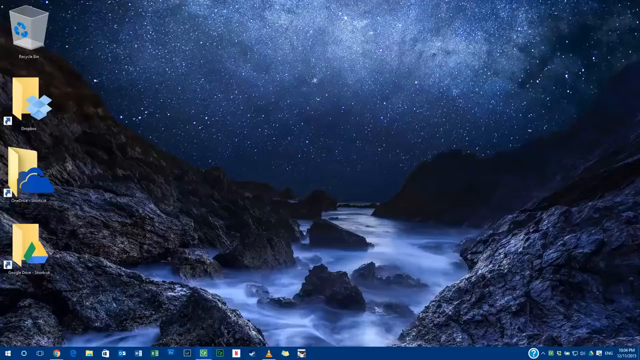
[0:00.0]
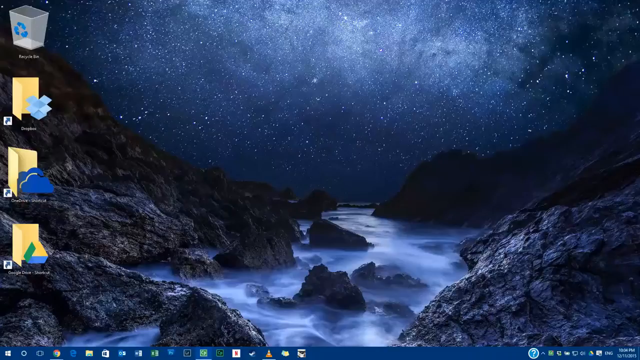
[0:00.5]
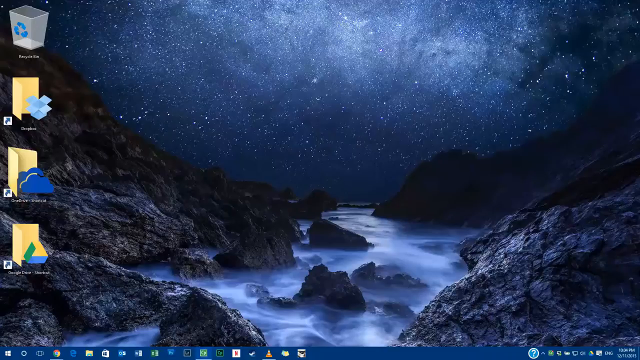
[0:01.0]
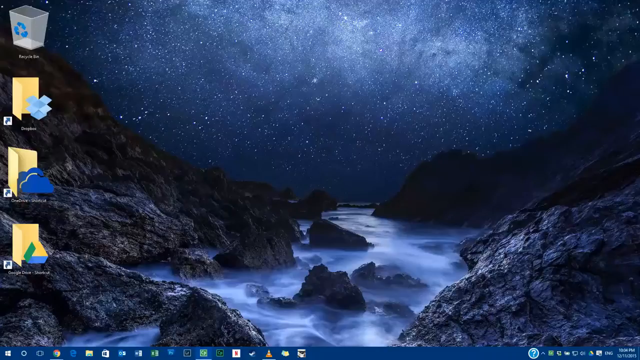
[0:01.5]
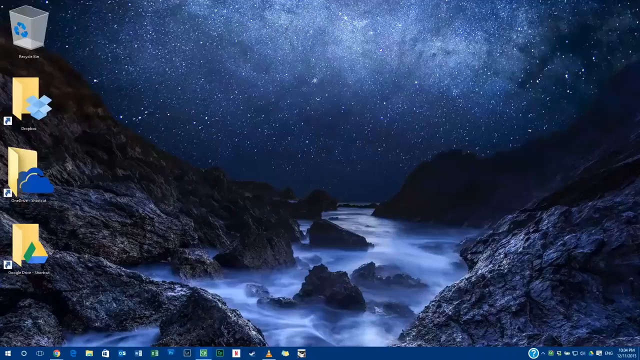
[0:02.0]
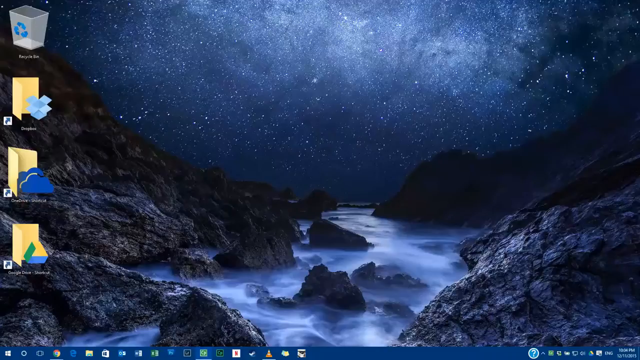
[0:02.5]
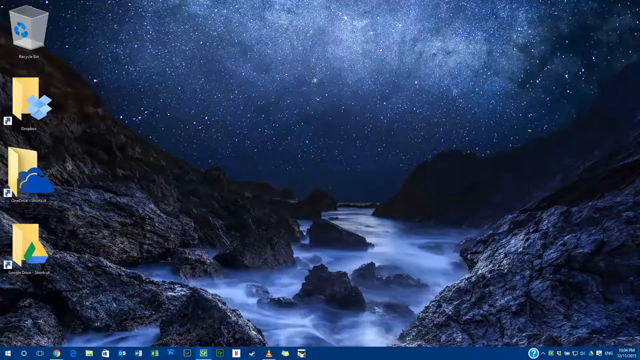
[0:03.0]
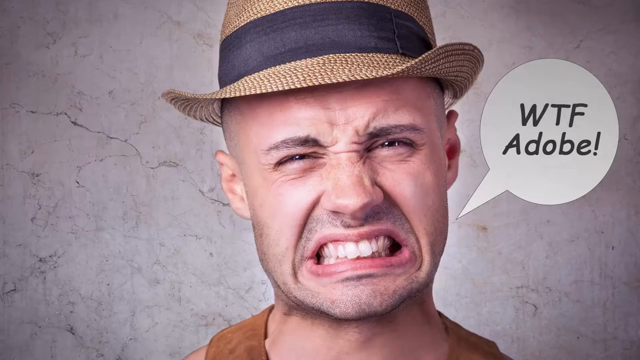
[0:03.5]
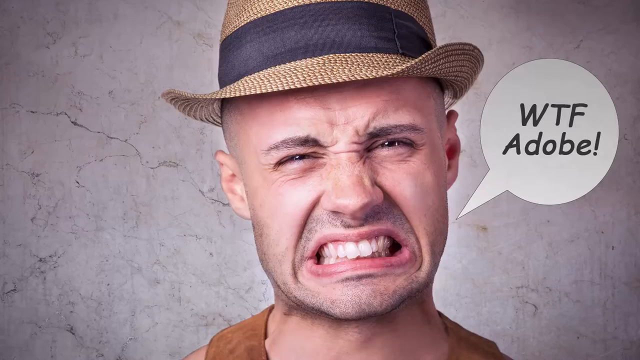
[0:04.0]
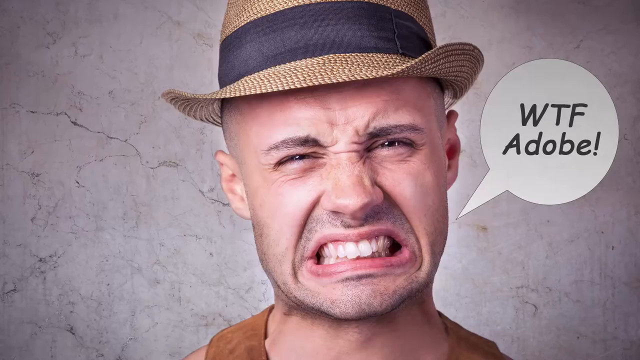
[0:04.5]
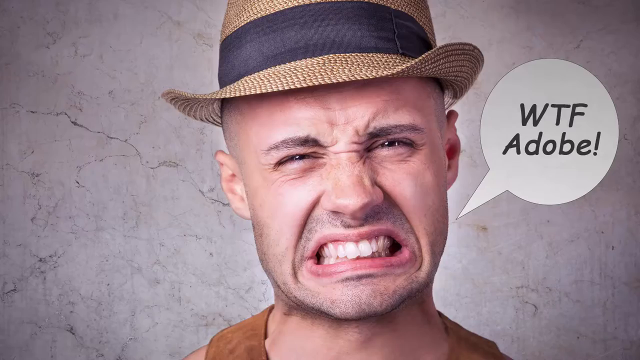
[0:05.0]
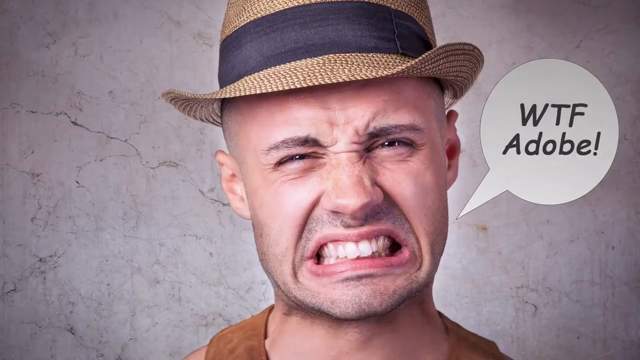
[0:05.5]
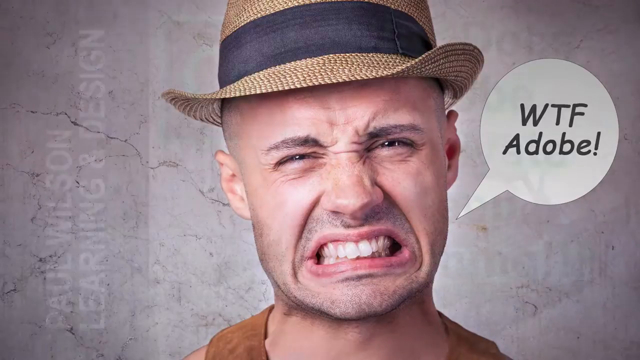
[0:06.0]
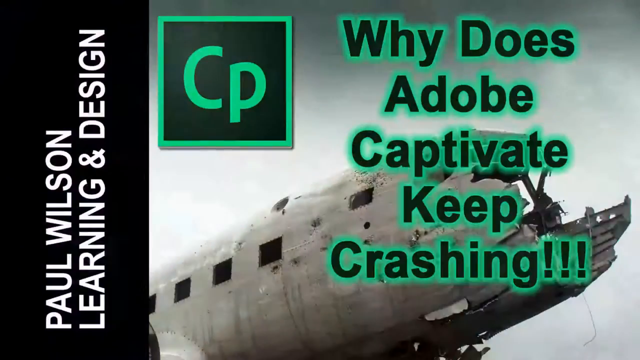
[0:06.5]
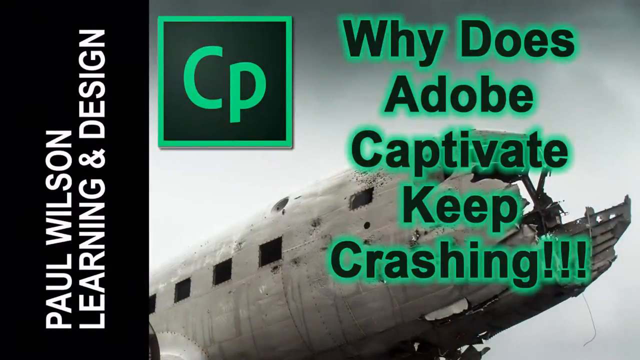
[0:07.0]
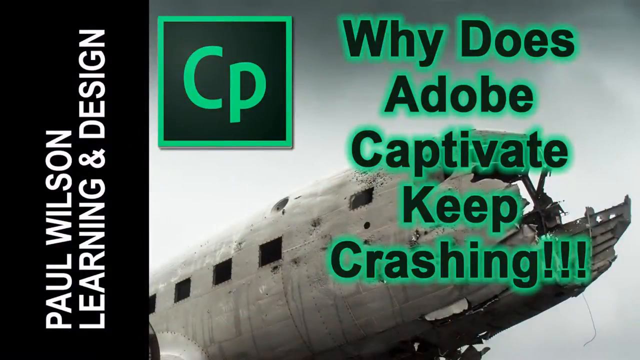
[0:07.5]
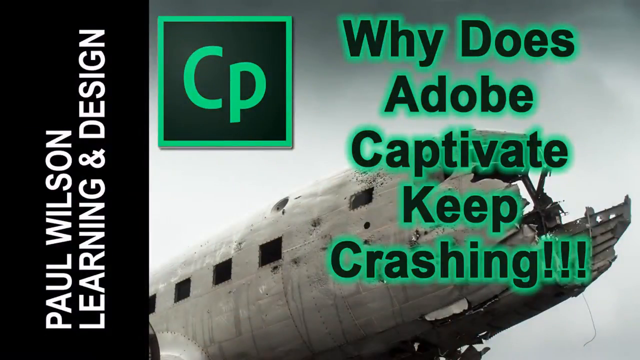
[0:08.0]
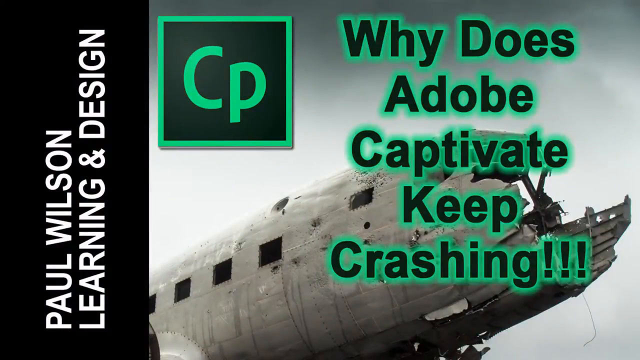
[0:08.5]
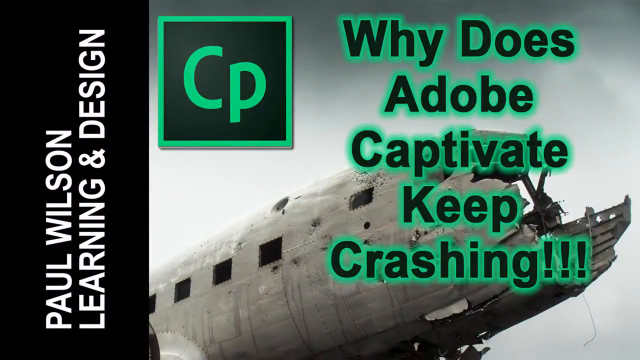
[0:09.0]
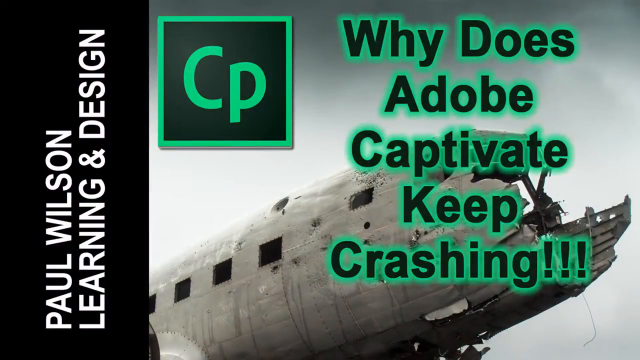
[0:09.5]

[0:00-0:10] A very dark screen shows the text "why does Adobe keep crashing?" It is a tutorial video about why this Adobe computer software keeps crashing. A Caucasian man appears who says "WTF Adobe" and looks very disgusted at what is happening, and the text "Paul Wilson learning" appears.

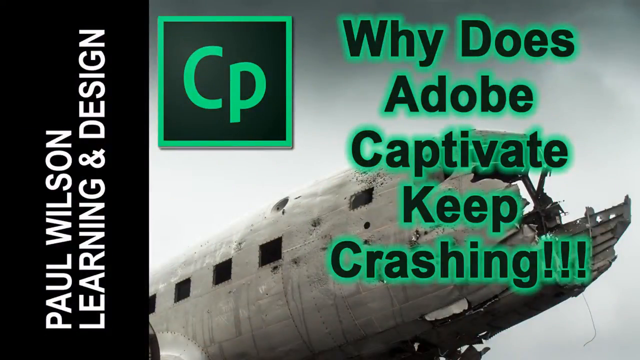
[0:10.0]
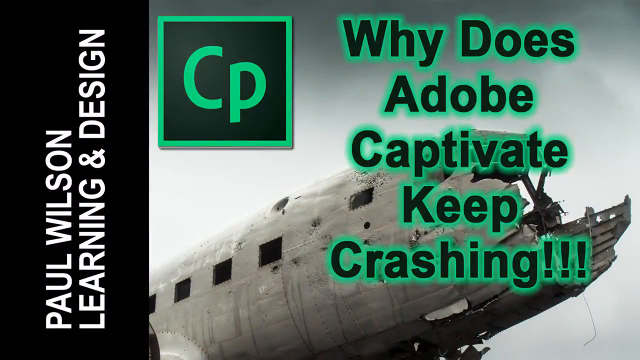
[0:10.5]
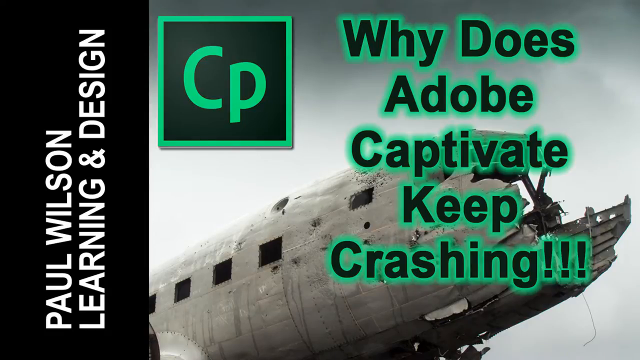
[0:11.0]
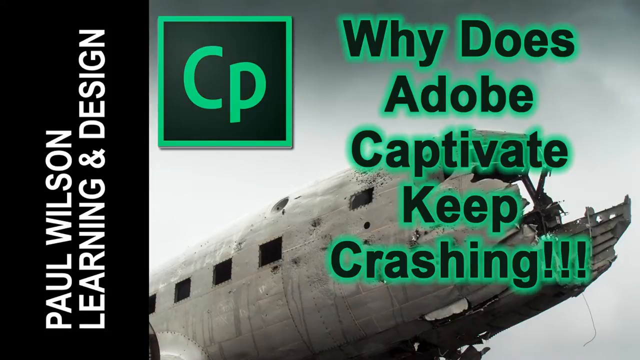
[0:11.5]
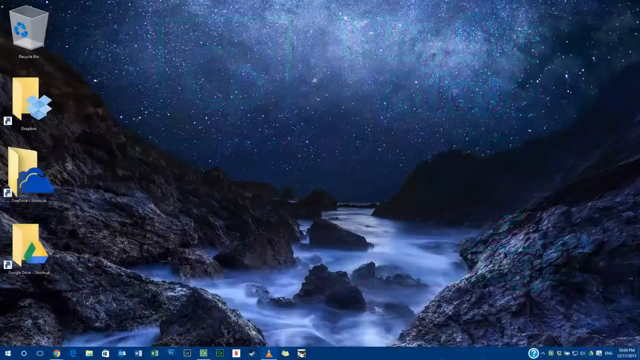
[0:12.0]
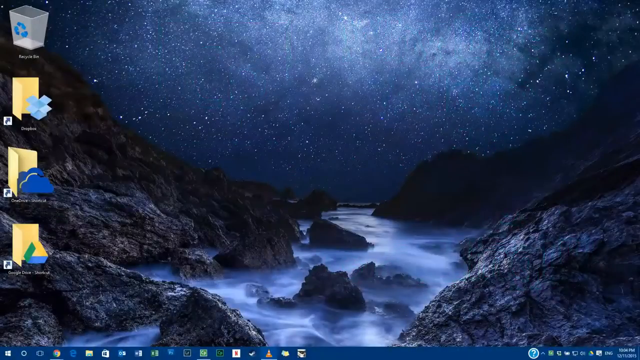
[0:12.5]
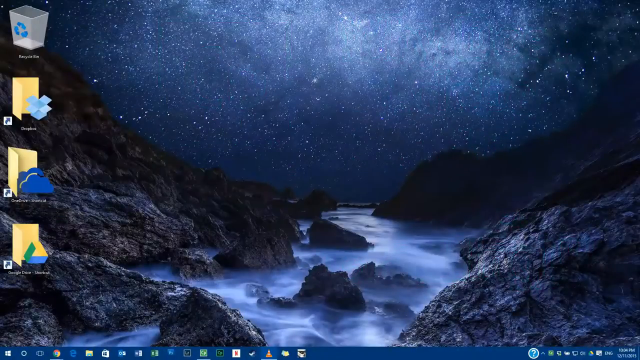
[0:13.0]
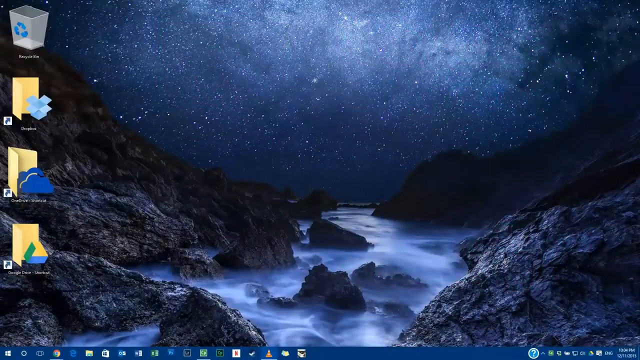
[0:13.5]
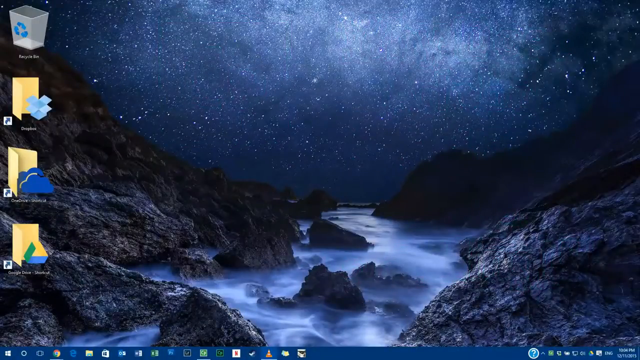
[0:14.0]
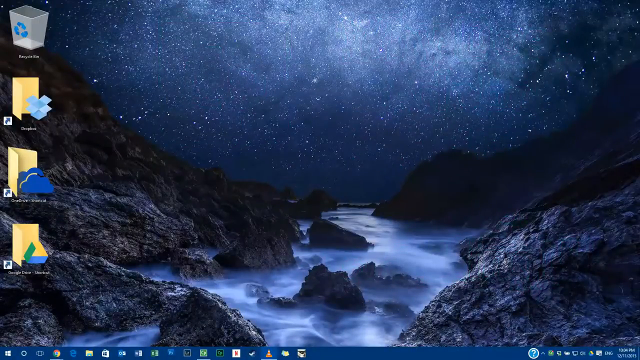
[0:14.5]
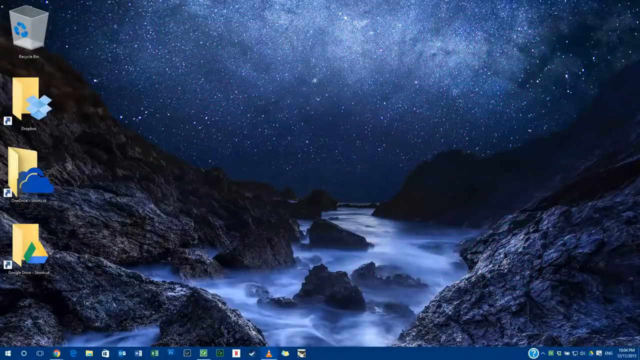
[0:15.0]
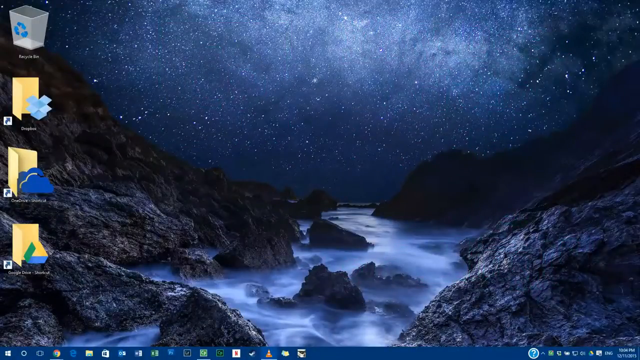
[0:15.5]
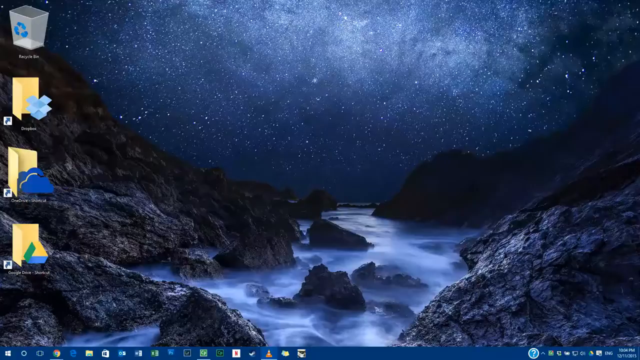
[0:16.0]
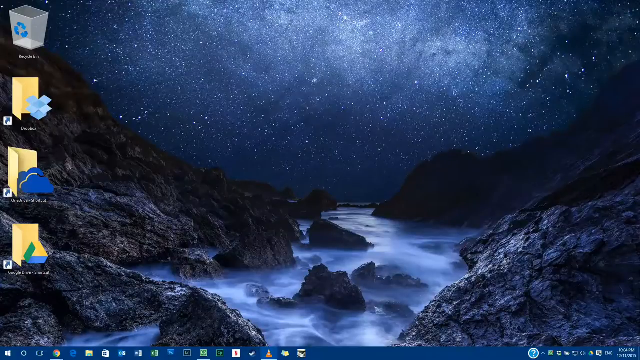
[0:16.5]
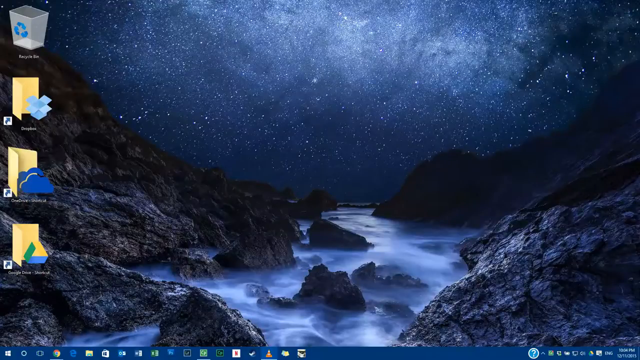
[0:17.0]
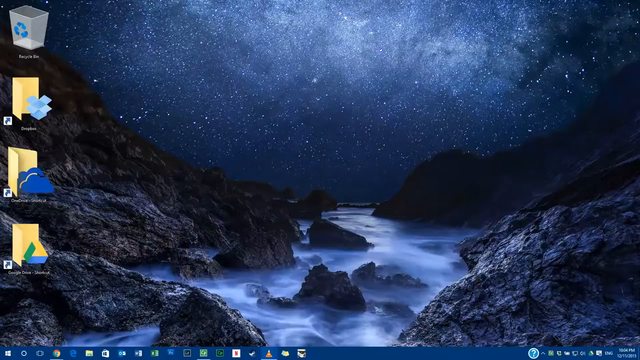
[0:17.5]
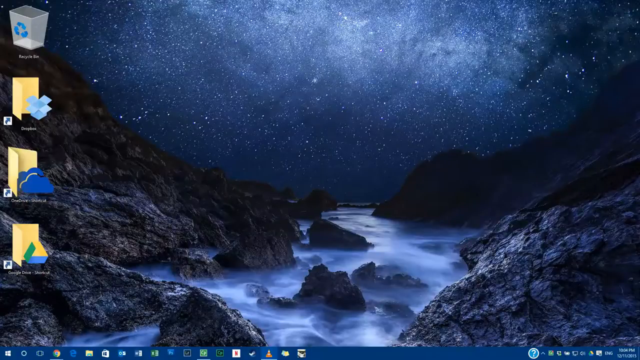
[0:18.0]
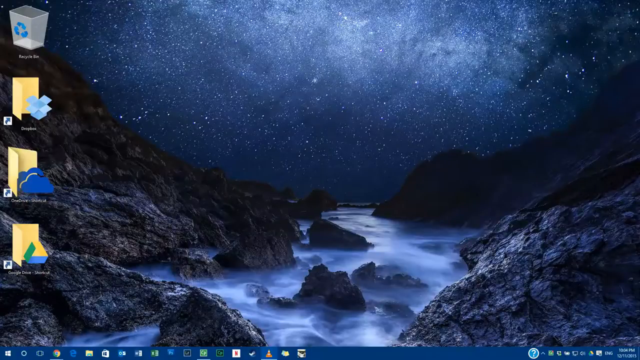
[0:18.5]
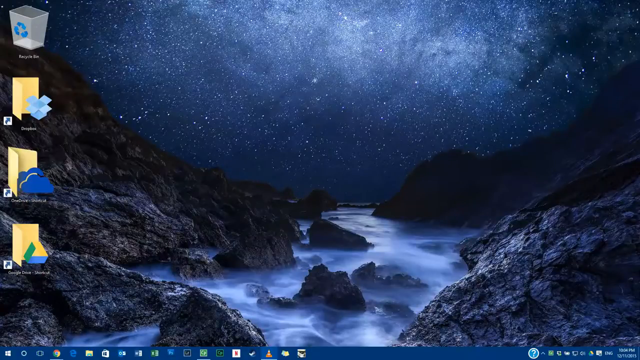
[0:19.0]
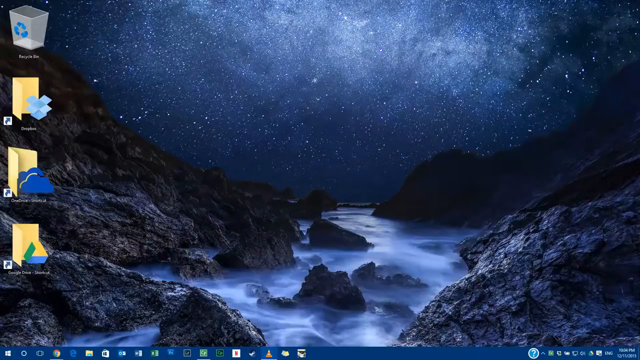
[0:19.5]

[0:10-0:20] A desktop screen appears with a bunch of files in a folder and a recycling bin at the top left, with the text "why does Adobe Captivate keep crashing." The desktop background has various dark areas, including a dark valley.